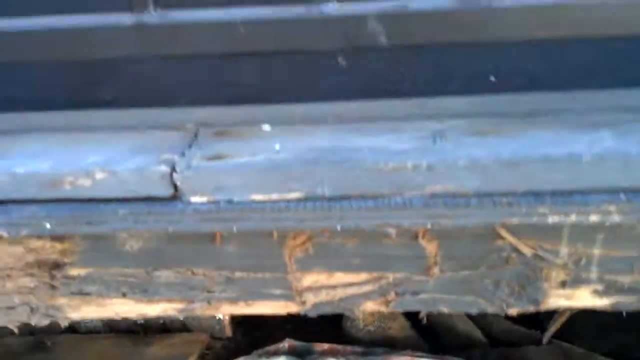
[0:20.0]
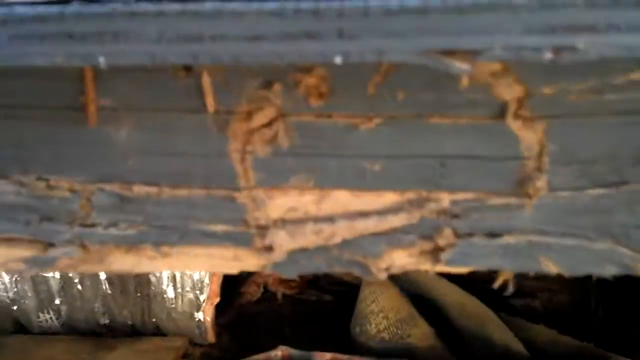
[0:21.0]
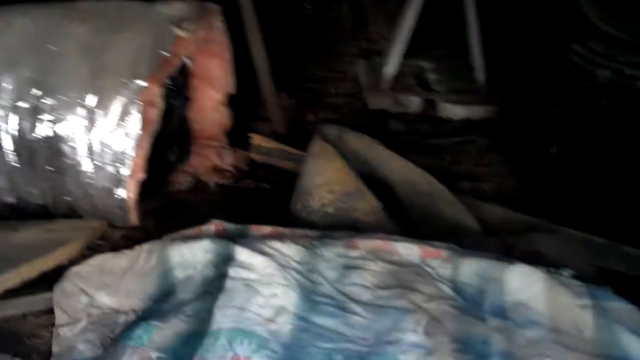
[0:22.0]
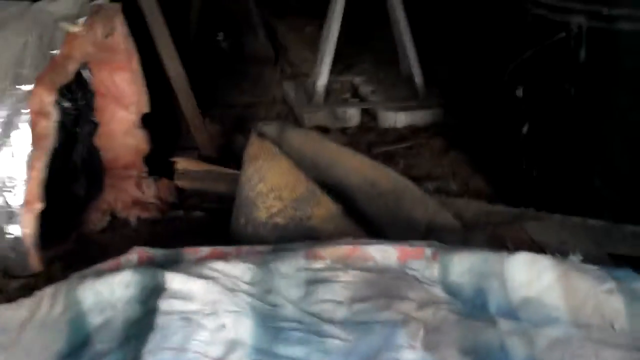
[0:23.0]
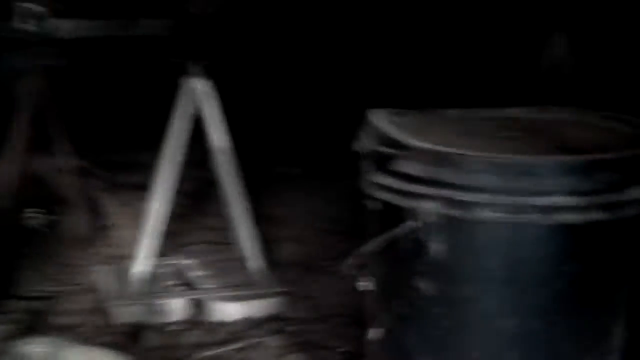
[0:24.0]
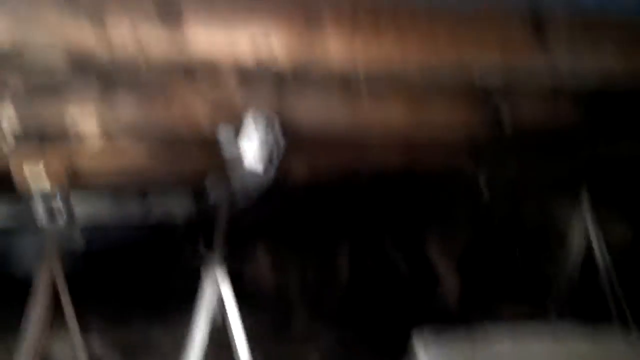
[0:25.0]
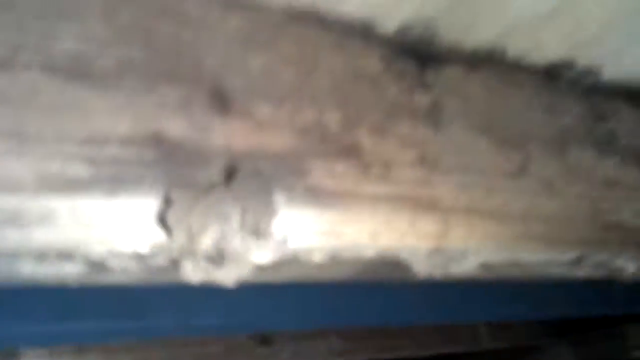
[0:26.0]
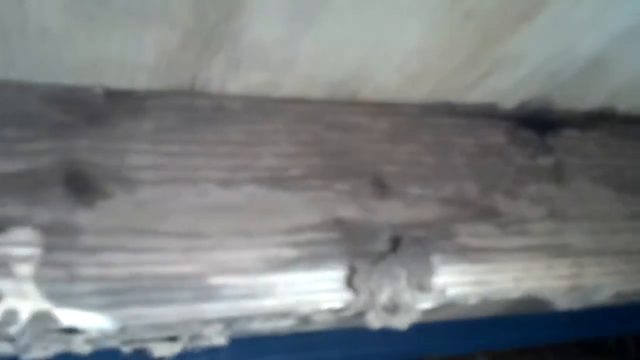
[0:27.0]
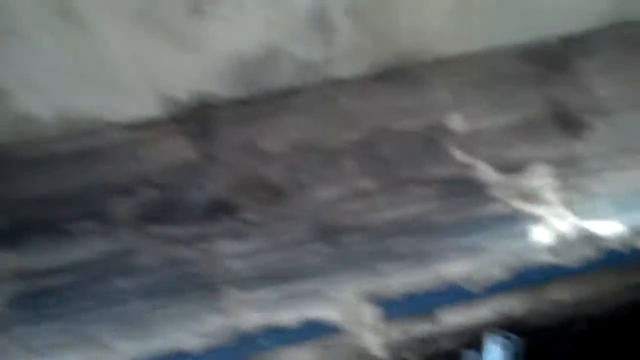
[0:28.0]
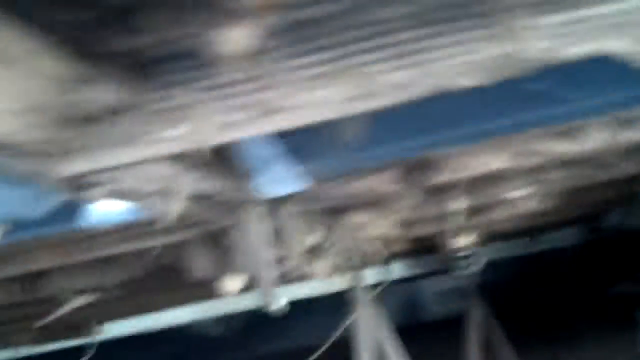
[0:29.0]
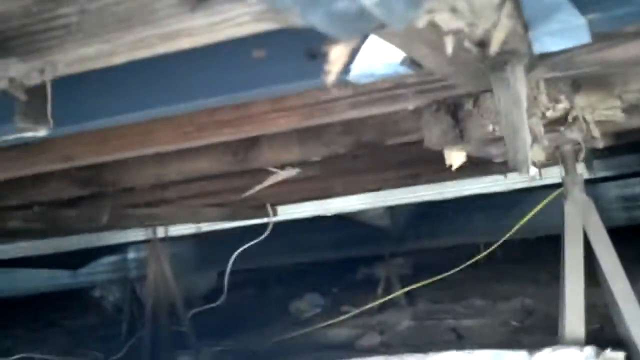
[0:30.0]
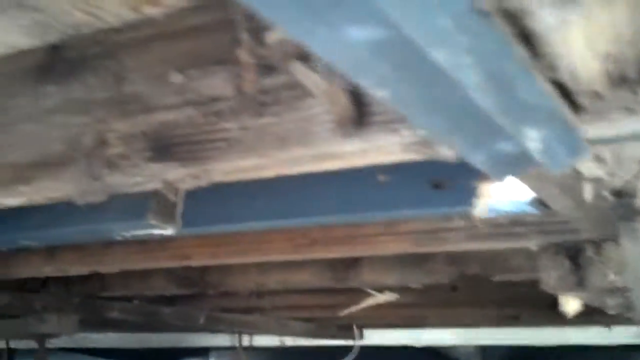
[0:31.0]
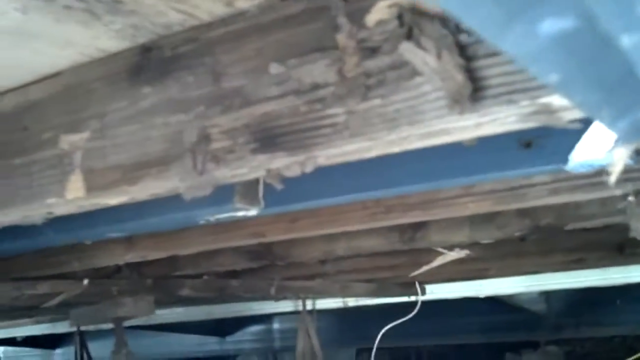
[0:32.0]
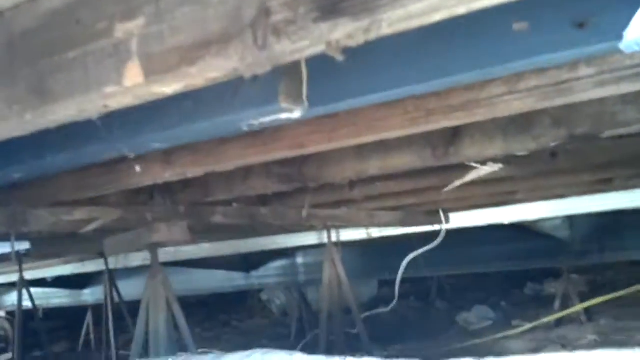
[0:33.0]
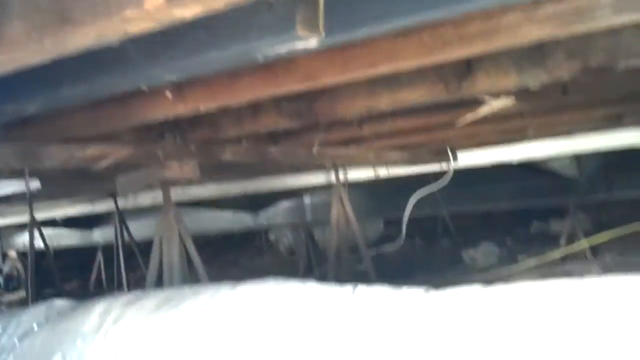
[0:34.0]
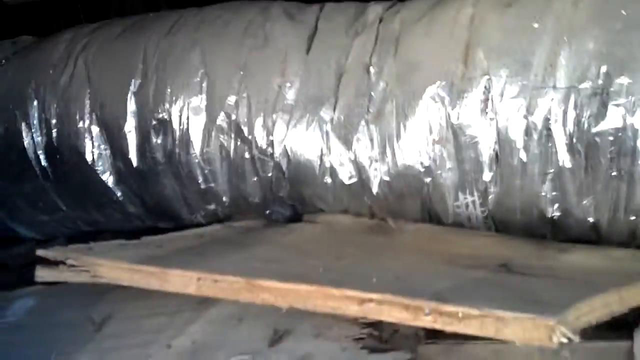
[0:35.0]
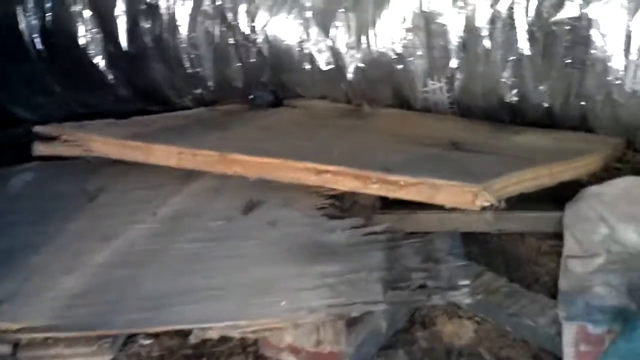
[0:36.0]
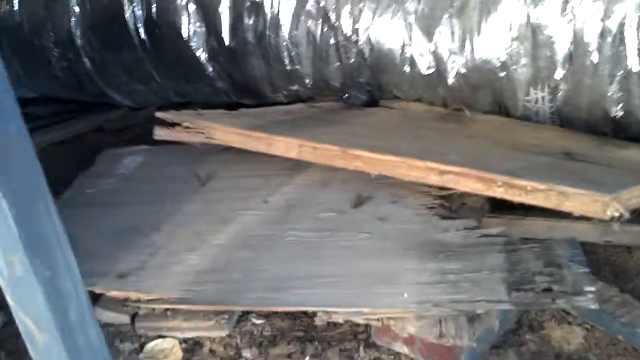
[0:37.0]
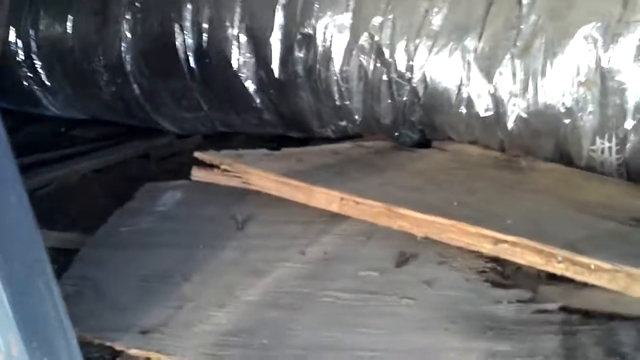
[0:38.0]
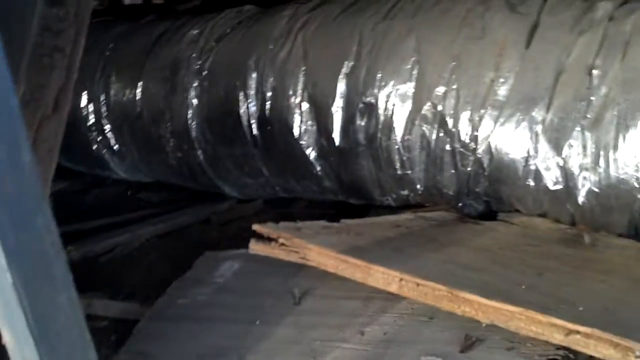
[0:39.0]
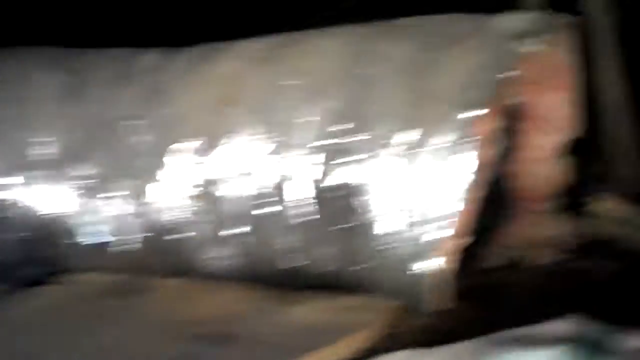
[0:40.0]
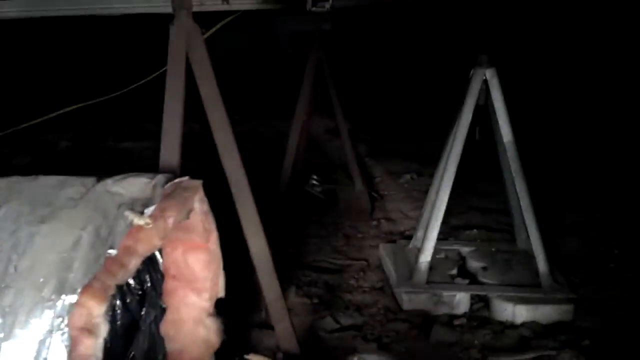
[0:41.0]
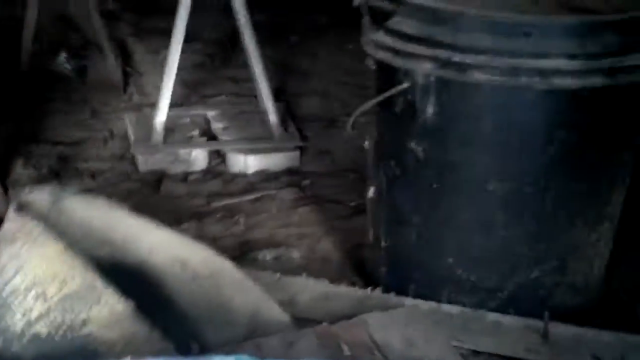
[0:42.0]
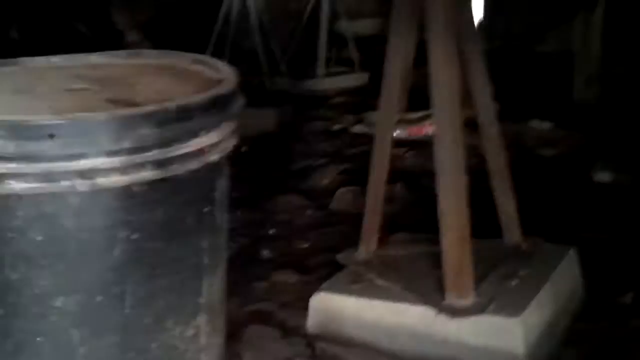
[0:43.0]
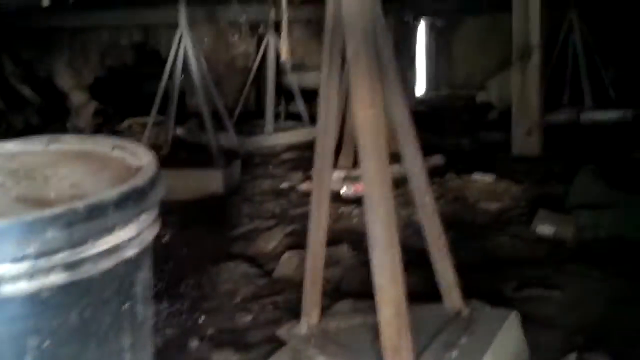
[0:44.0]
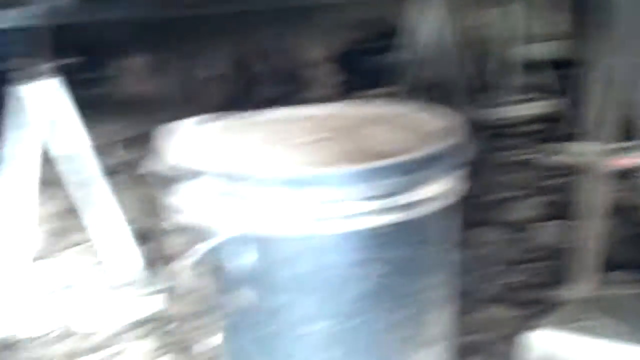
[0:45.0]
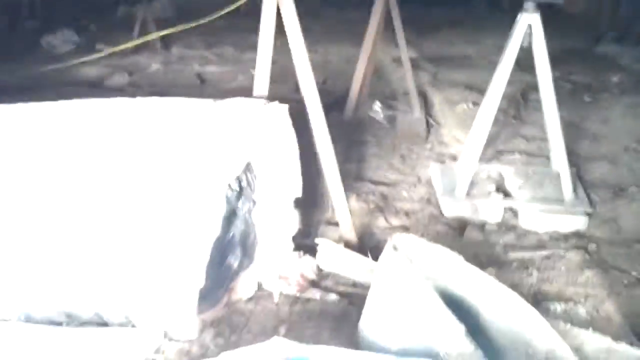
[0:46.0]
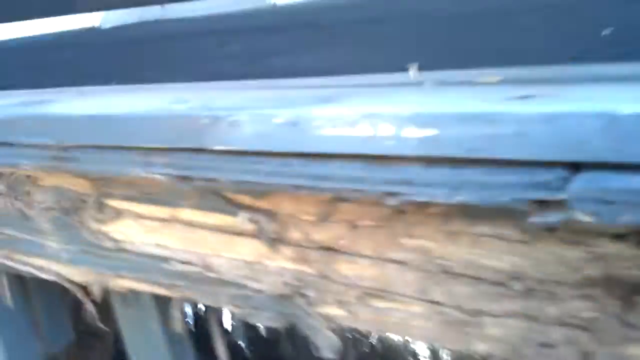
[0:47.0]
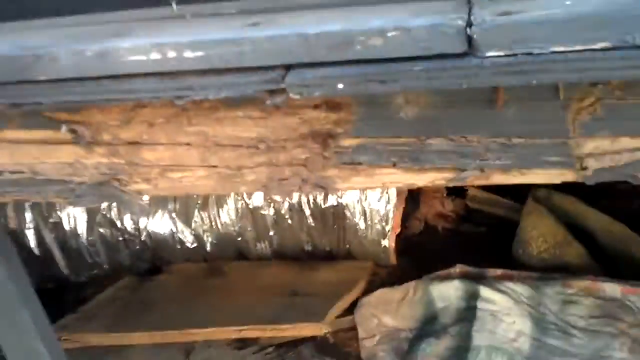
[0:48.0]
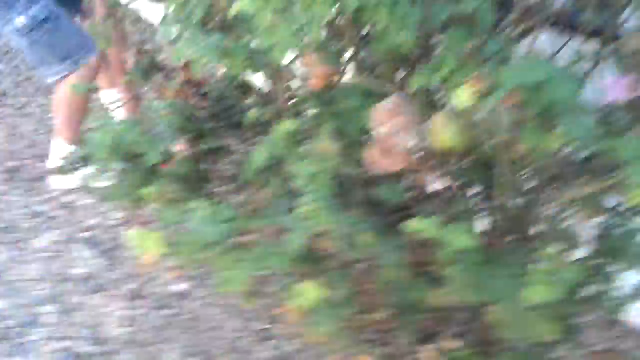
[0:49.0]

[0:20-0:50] The camera goes into the crawl space, with extreme close-ups showing the condition of the wood inside, which looks very dirty and heavily decayed. The camera focuses a little on the silver tubing. Underneath it are some boards and apparently a couple of buckets; the bucket underneath is black. Some two-by-fours are set in tripod-type shapes, possibly helping hold up the porch. There is a little blue on the wood above, but the colors are mostly natural wood. The crawl space looks very unfinished and not in great shape. There are possibly a couple of little creatures close to the silver duct, perhaps mice, which may have been gnawing at the wood. The very shaky camera then comes out of the crawl space and shows the gravel area surrounding it, and the video cuts off while looking at that area.